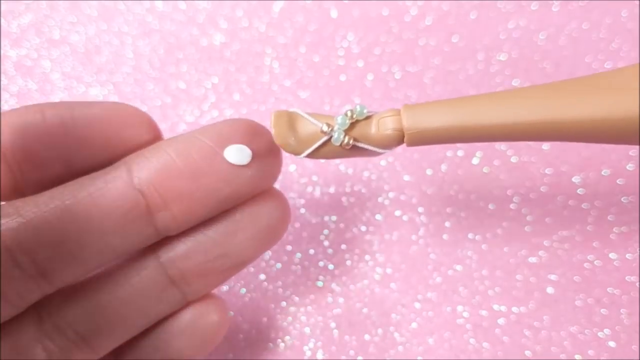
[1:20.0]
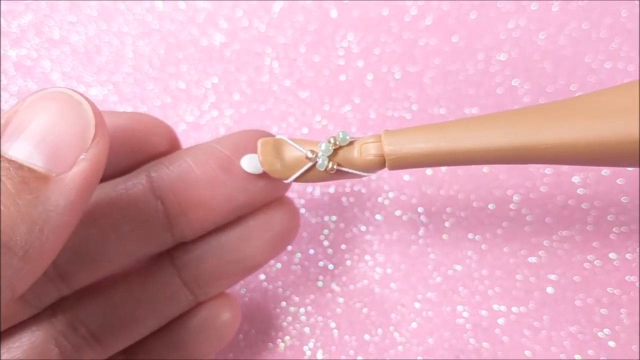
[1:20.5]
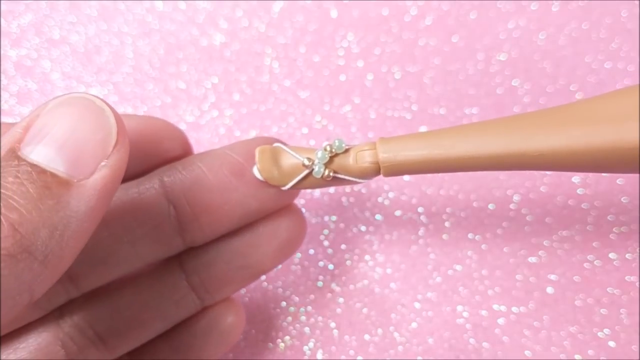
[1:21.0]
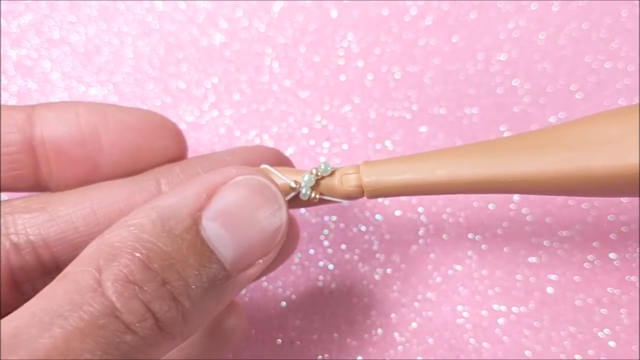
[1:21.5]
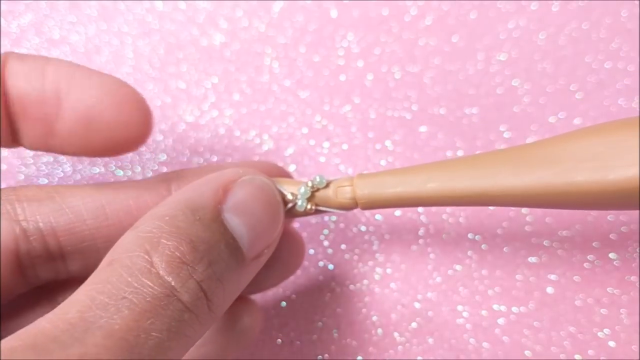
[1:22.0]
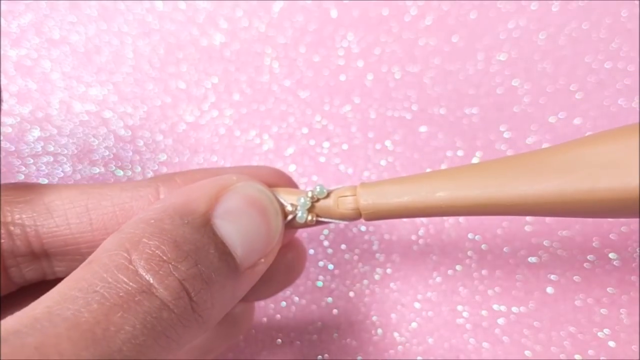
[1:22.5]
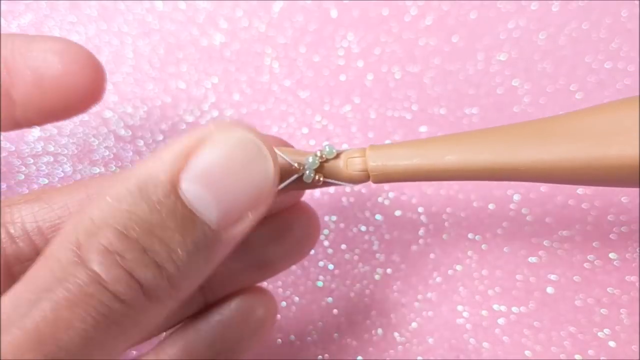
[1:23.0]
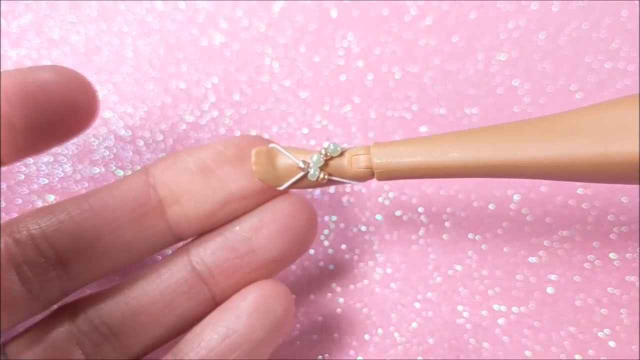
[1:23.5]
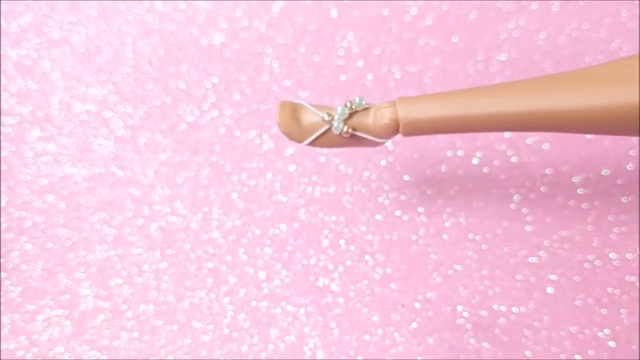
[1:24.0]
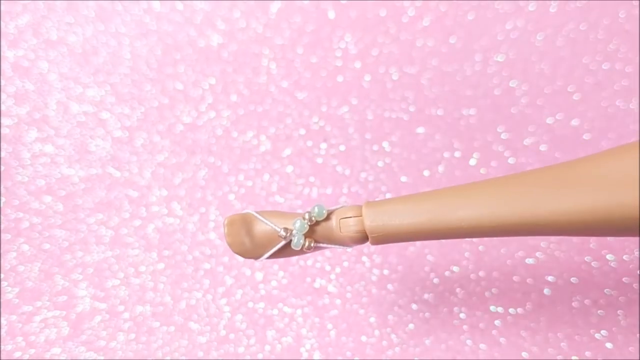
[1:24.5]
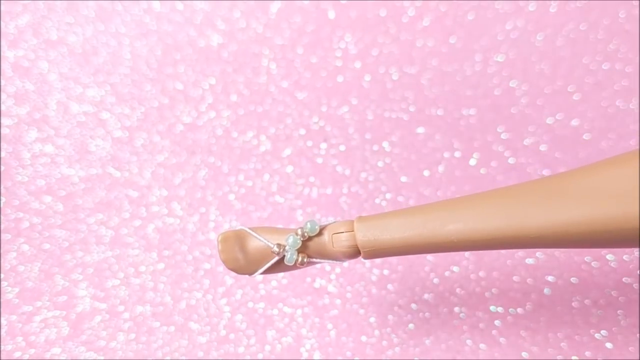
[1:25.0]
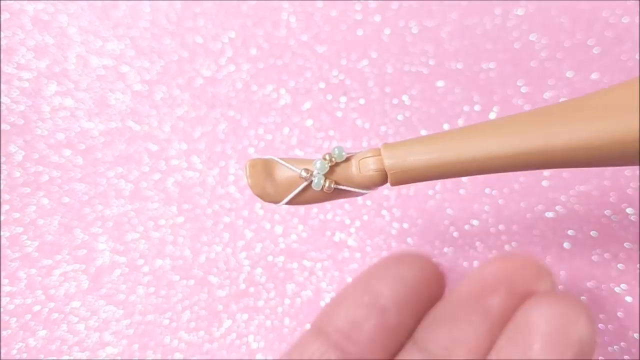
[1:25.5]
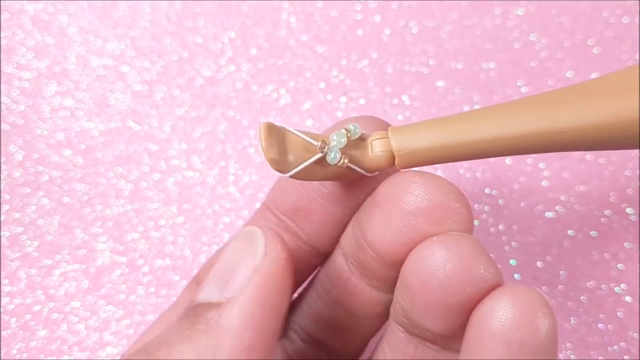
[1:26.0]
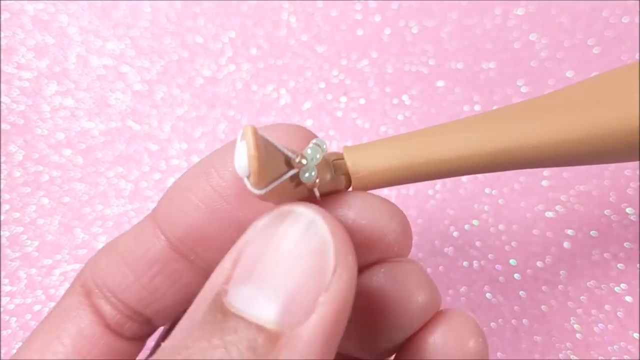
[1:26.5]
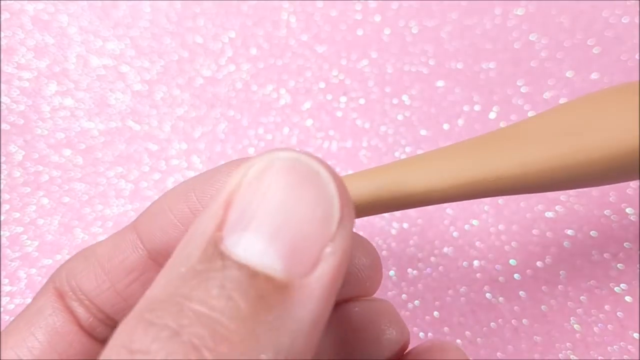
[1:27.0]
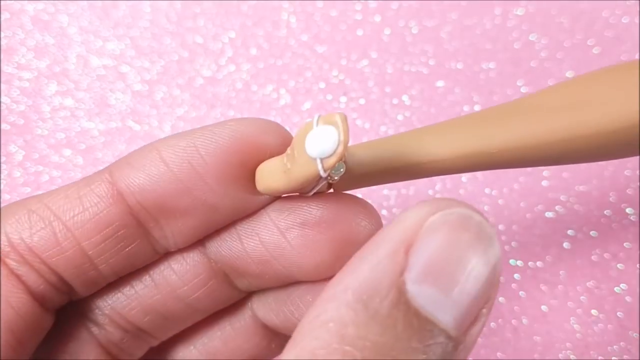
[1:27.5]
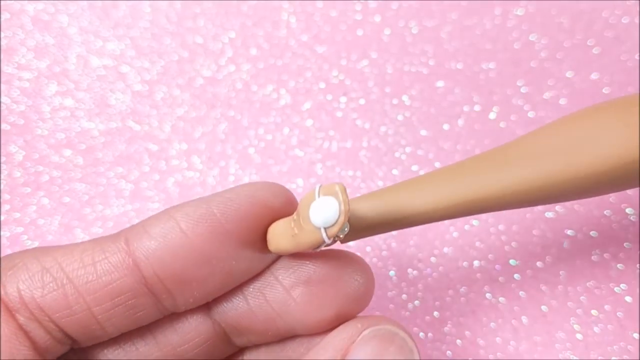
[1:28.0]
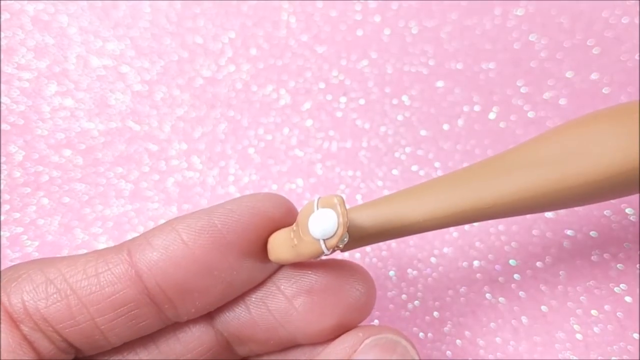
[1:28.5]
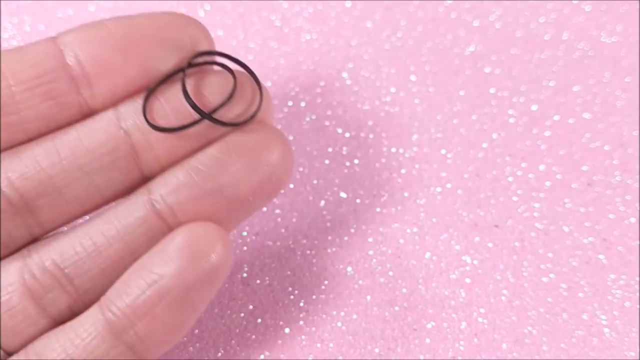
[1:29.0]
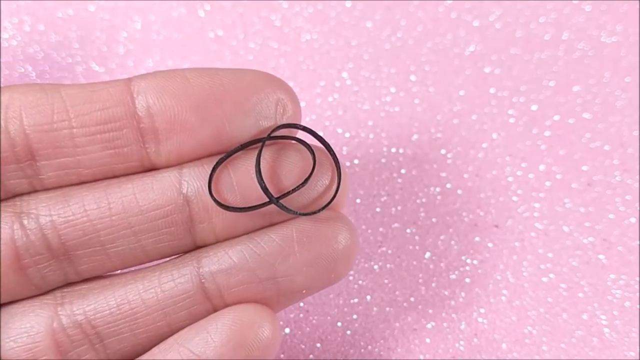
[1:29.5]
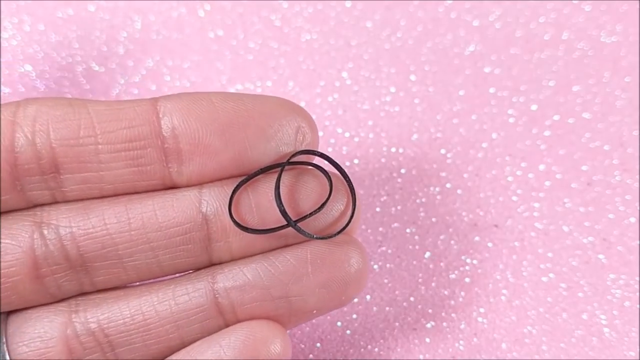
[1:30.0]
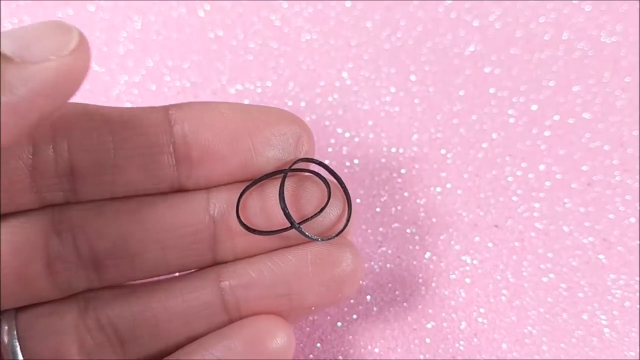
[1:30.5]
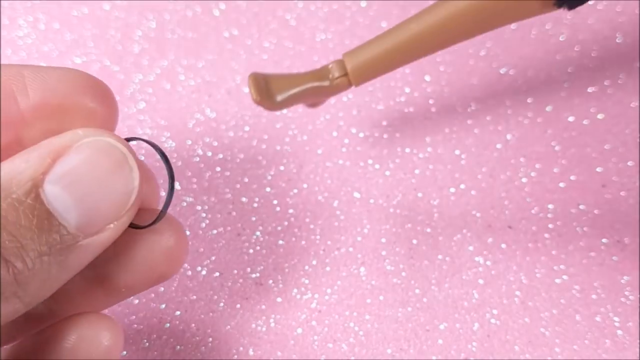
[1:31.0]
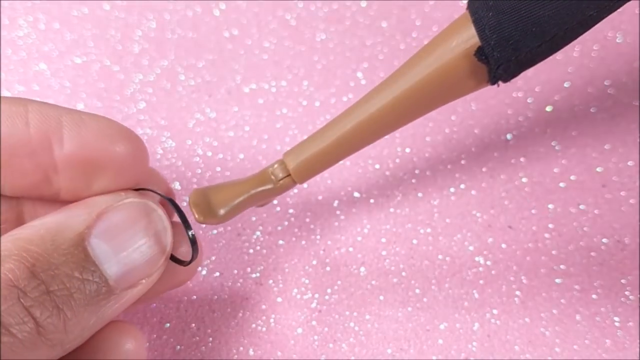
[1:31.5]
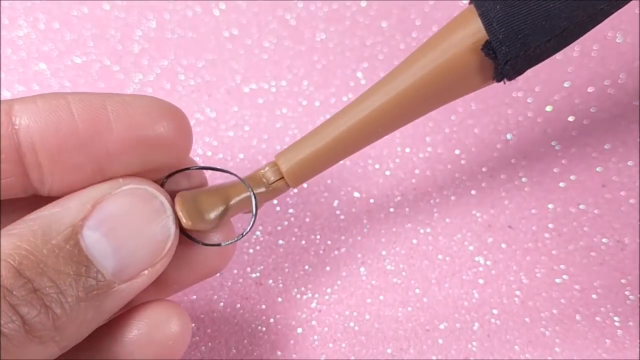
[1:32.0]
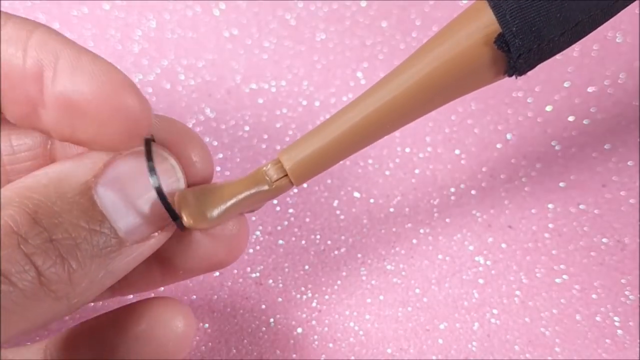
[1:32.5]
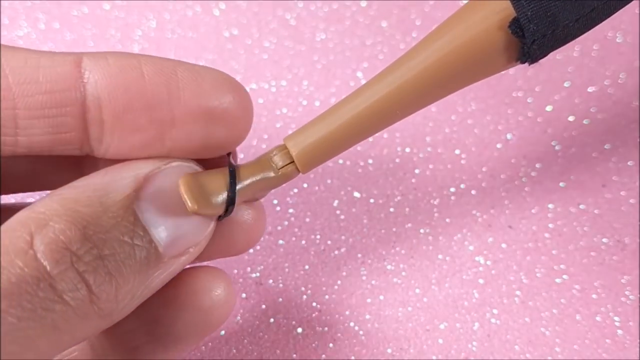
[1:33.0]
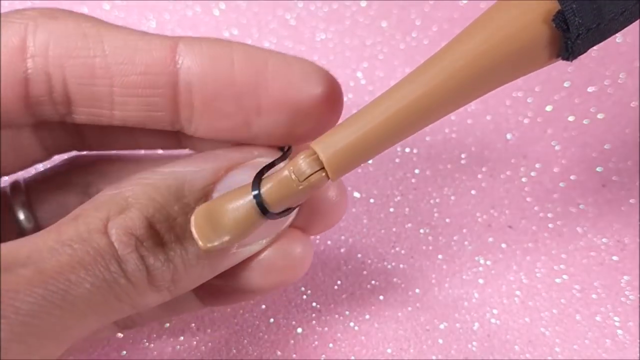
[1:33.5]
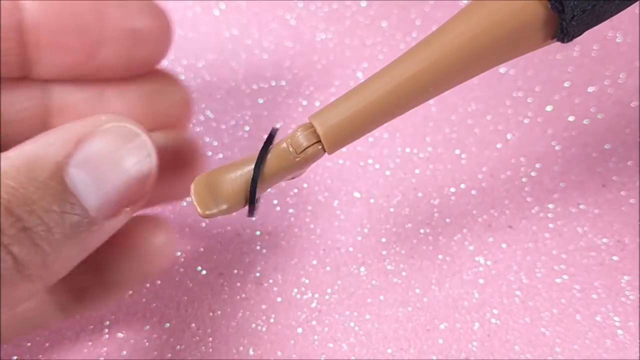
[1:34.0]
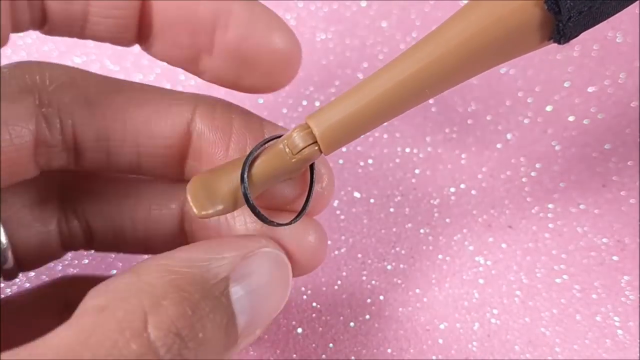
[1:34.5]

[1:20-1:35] The last accessory turns out to go on the bottom of the sandal, apparently to make it look more realistic and hold the string in place; it looks like maybe a sticker or something sticky. Then two black rubber bands, black and sleek, are placed on one of the Barbies, apparently to make a simple black sandal.